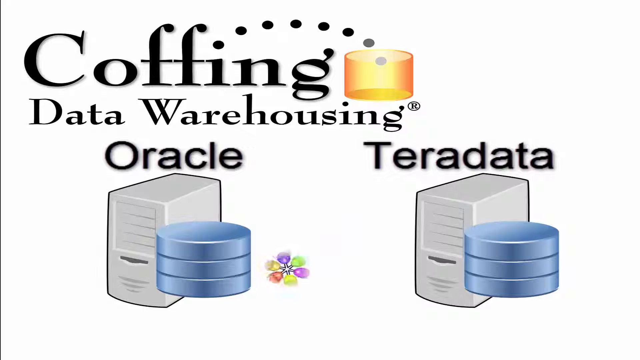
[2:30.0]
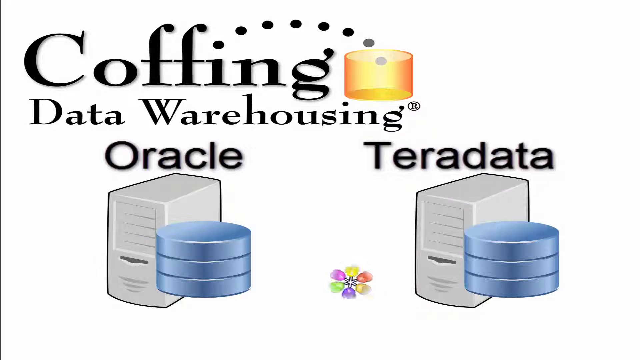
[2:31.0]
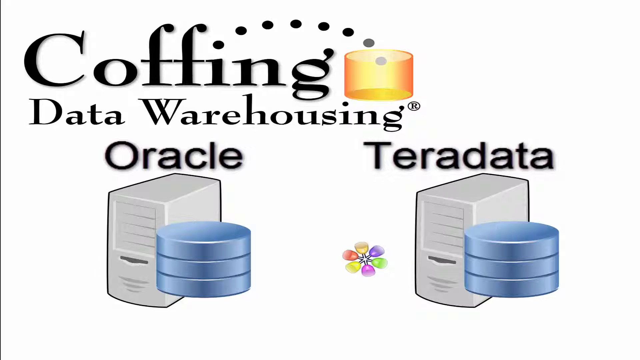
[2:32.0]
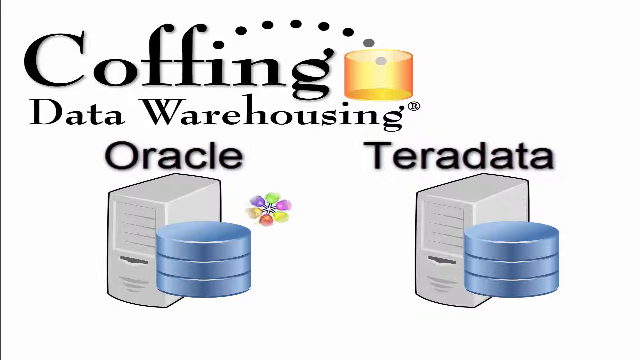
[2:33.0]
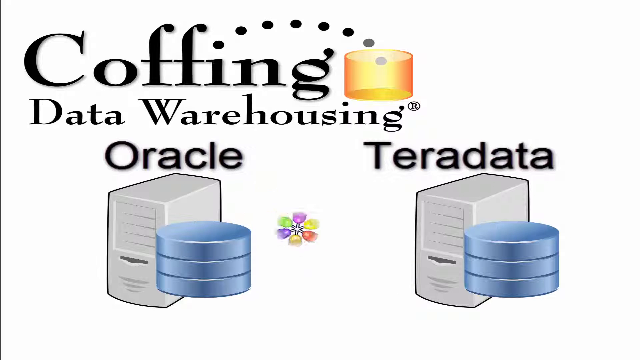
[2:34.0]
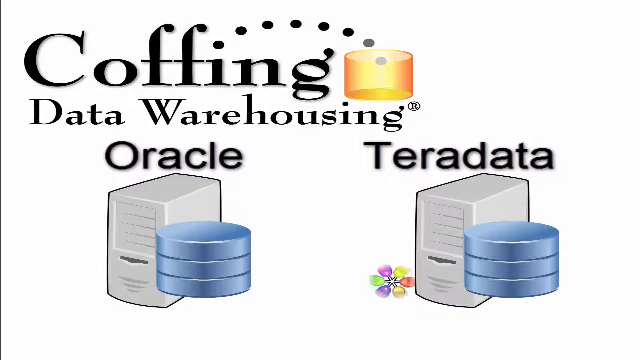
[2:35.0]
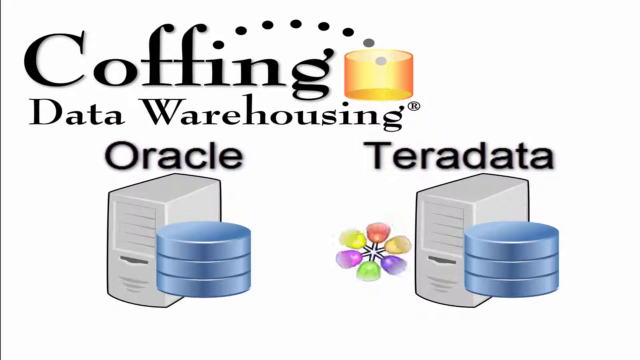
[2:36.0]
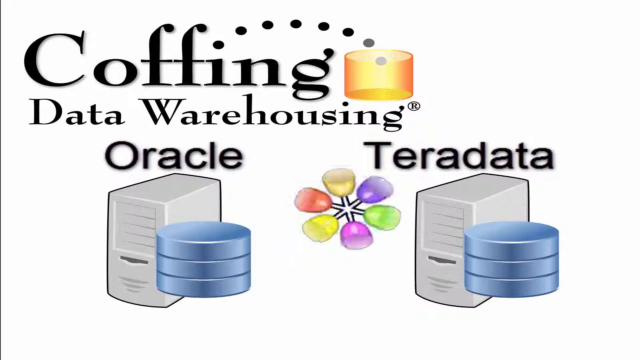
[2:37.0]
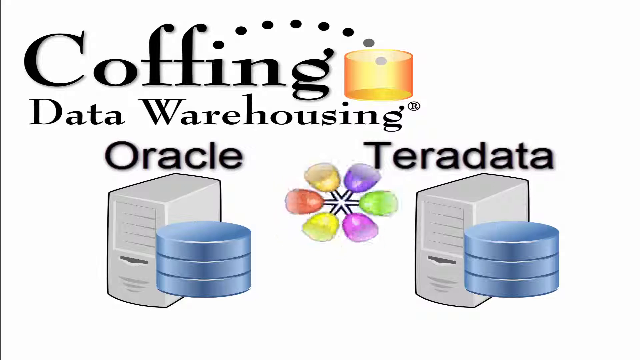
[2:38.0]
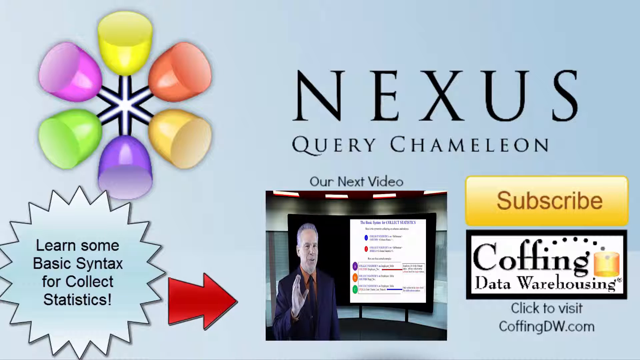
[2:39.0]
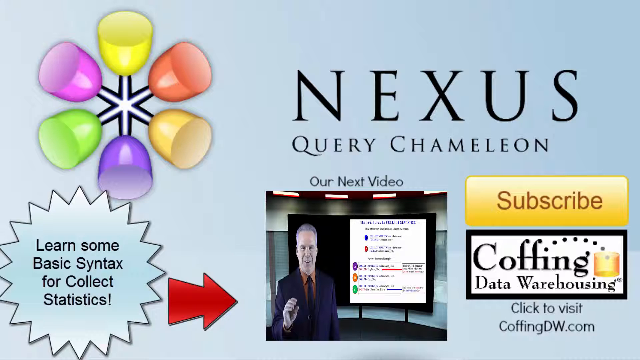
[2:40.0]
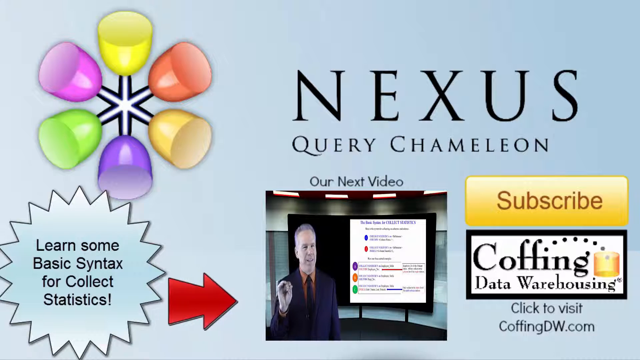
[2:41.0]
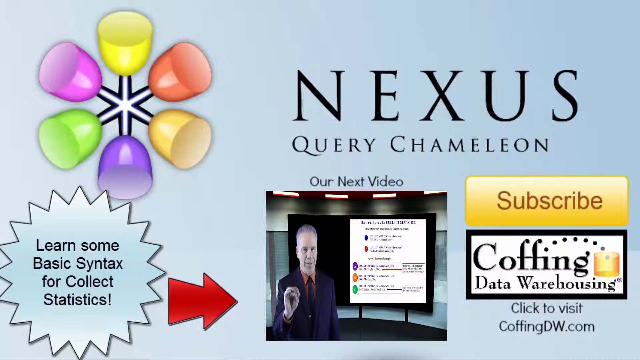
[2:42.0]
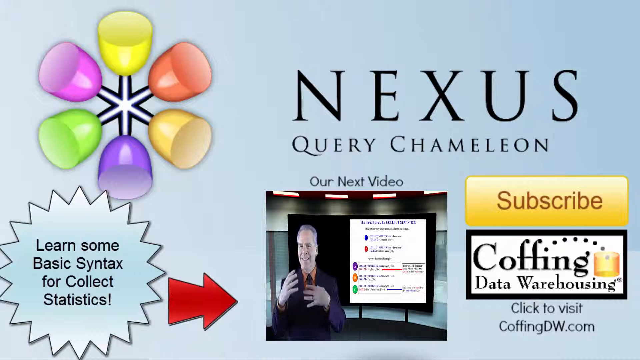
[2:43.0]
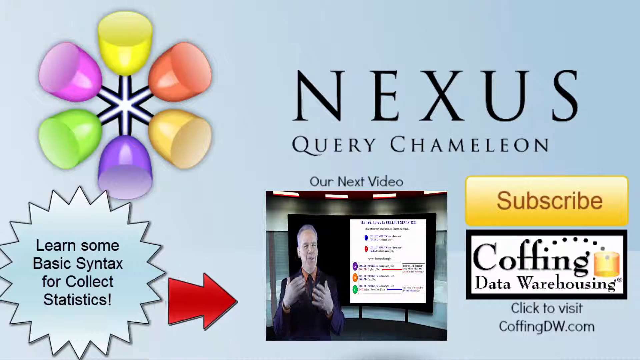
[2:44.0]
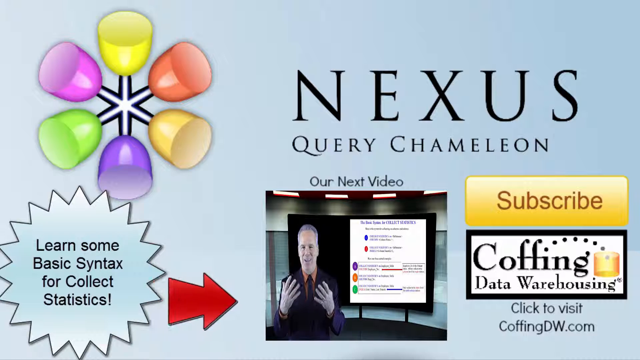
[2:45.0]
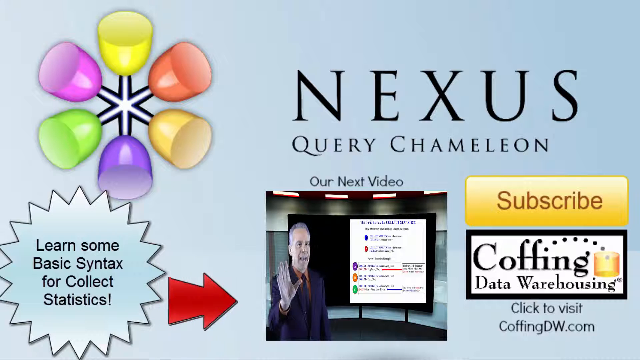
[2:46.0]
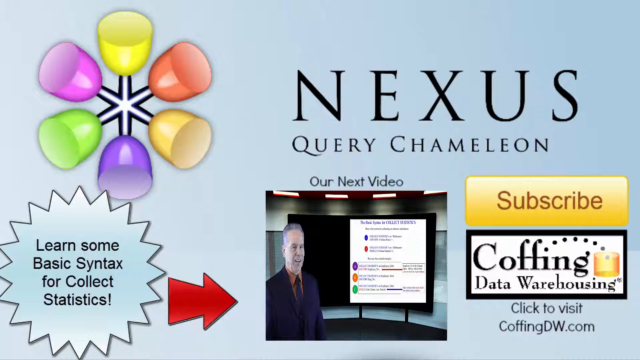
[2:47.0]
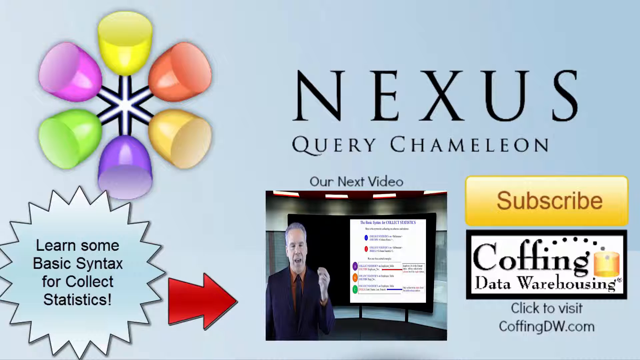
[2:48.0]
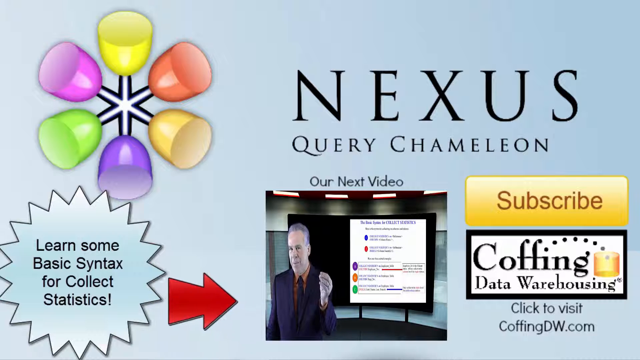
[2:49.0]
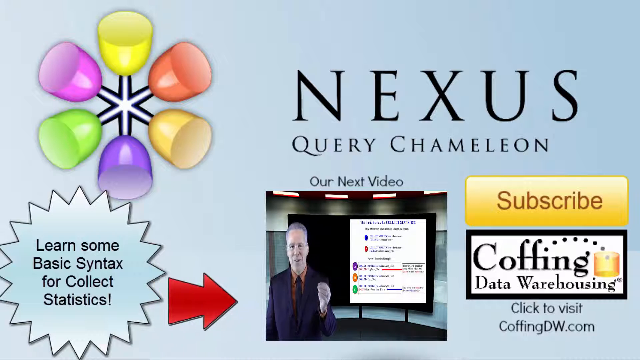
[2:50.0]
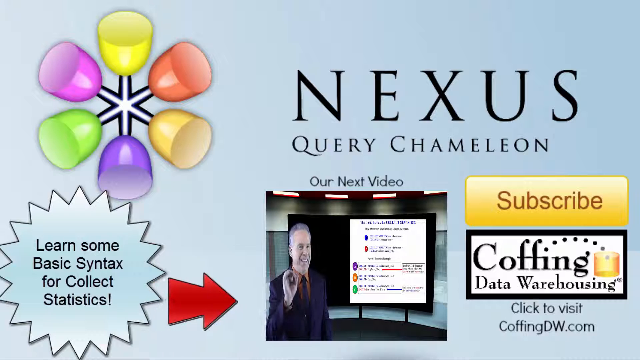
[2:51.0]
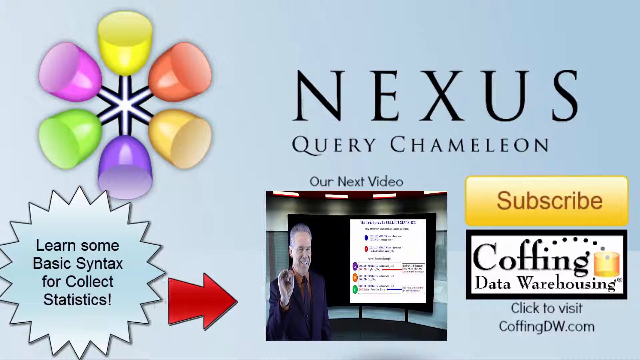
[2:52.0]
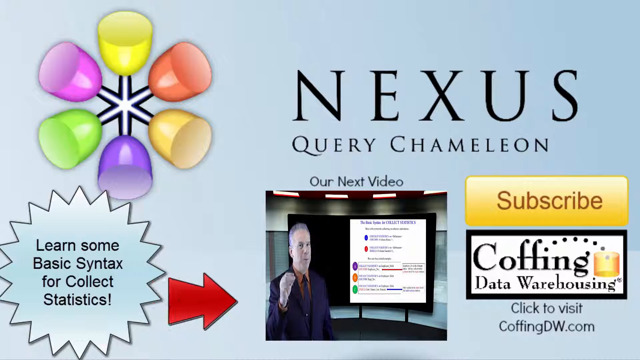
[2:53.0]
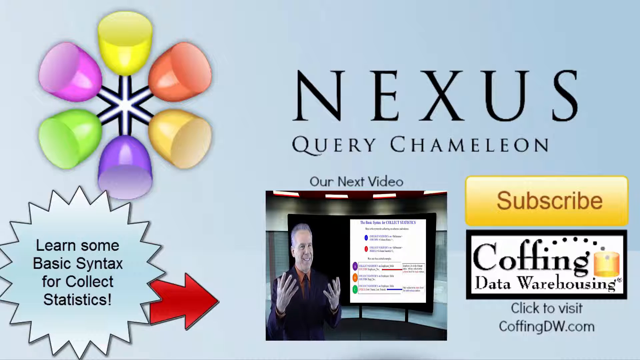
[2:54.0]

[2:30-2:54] A white screen shows the logo "Koffing Data Warehousing, Oracle Teradata." Next is a blue screen with the words "Nexus Query Chameleon" and a thick red arrow moving horizontally, pointing to a thumbnail of another video featuring the same man. A starburst on the screen says "learn some basic syntax for collect statistics," and there is a yellow subscribe button and a web address reading "visit koffingdw.com." In the upper left corner is an image of several colored shapes connected by straight lines that all intersect in the middle. This appears to be the conclusion of an educational video about statistics, encouraging the viewer to watch future videos by the same company.